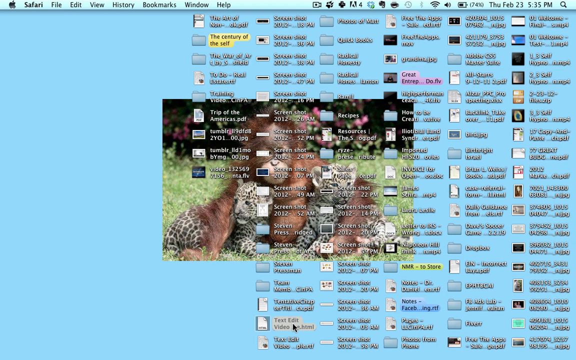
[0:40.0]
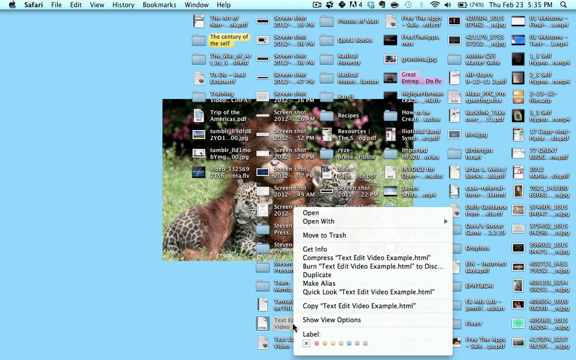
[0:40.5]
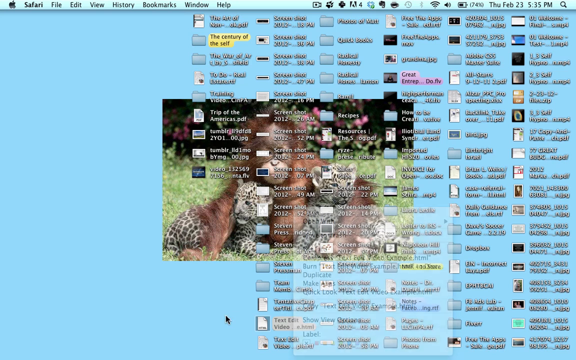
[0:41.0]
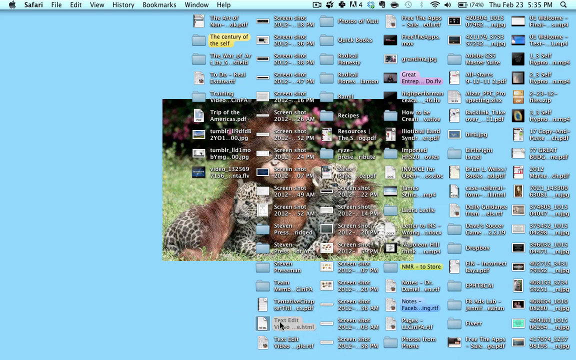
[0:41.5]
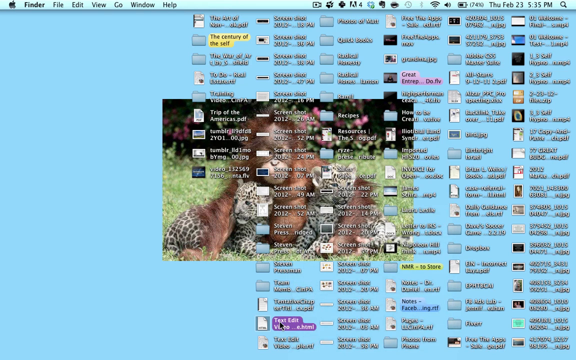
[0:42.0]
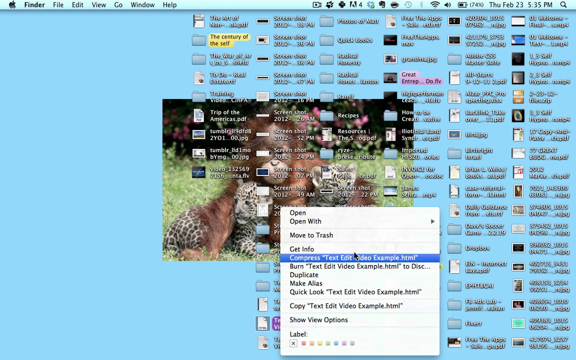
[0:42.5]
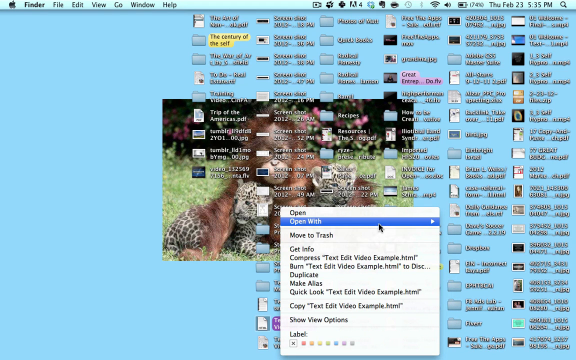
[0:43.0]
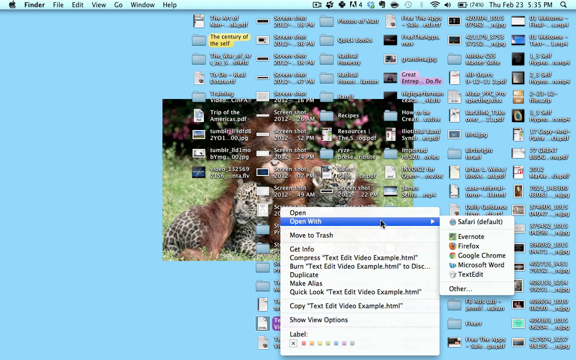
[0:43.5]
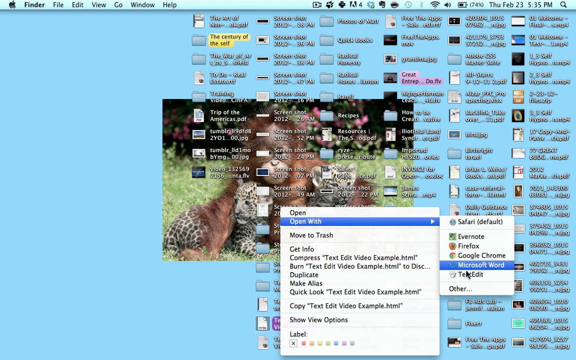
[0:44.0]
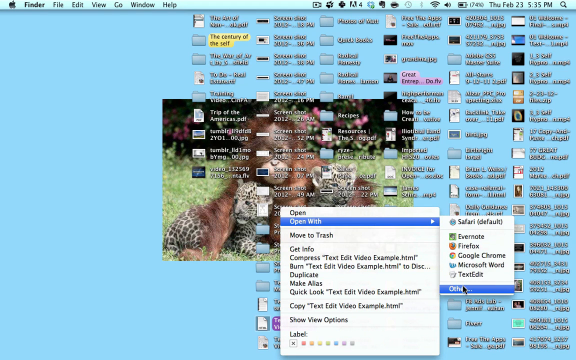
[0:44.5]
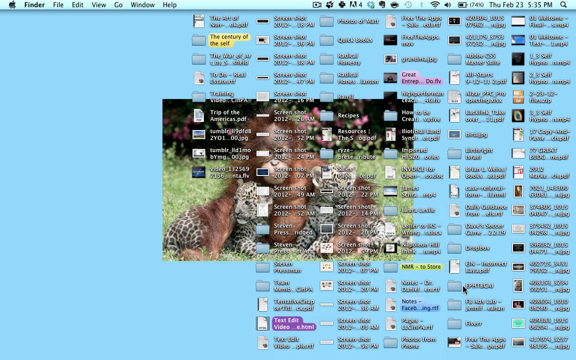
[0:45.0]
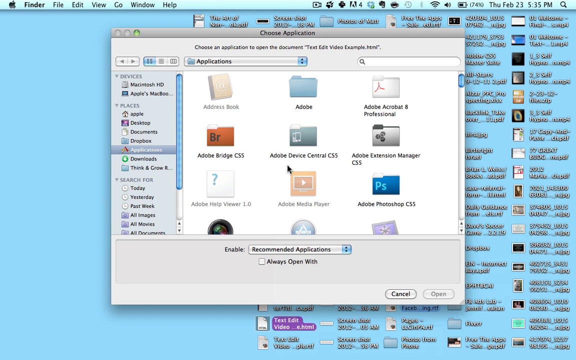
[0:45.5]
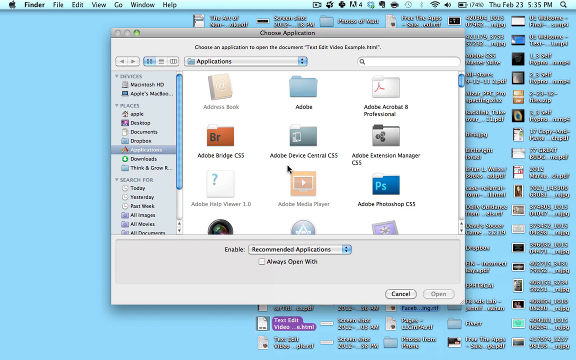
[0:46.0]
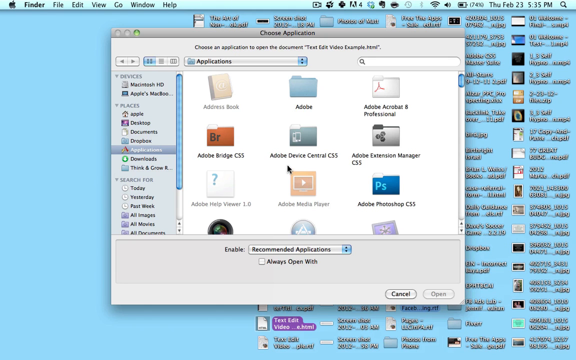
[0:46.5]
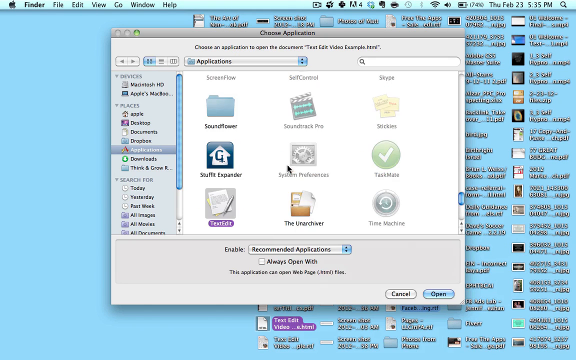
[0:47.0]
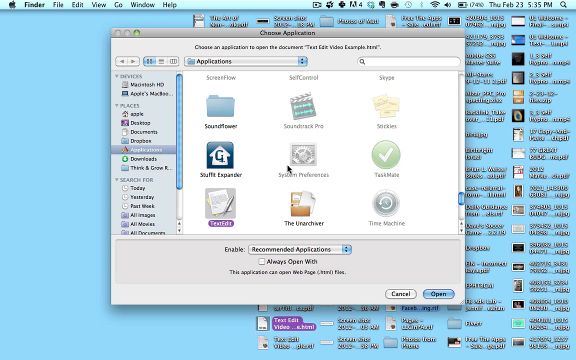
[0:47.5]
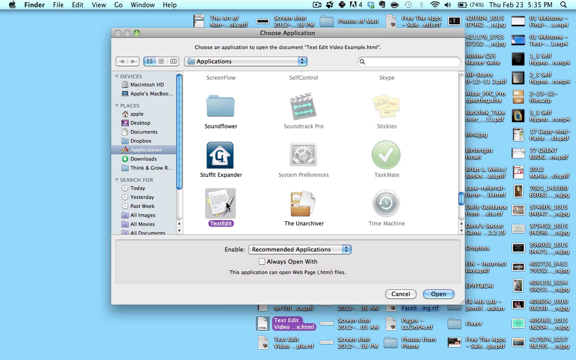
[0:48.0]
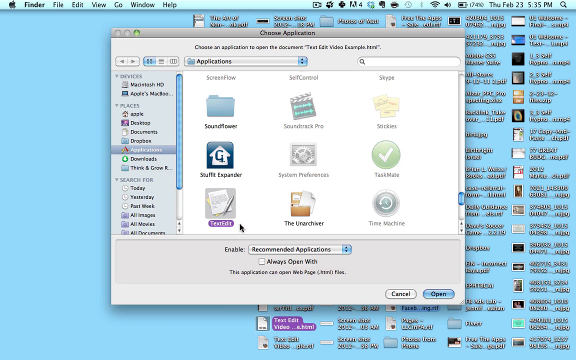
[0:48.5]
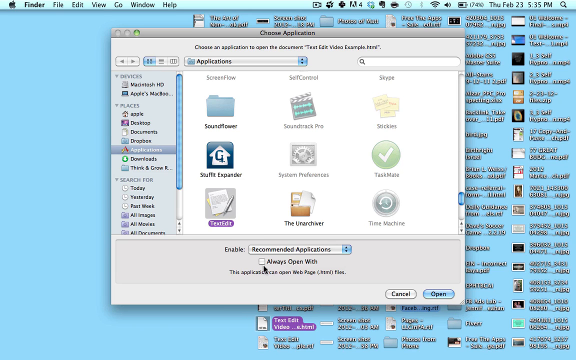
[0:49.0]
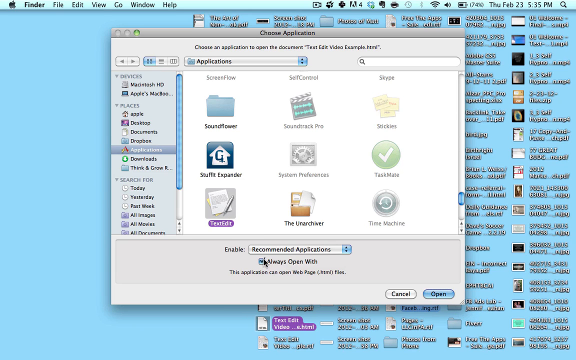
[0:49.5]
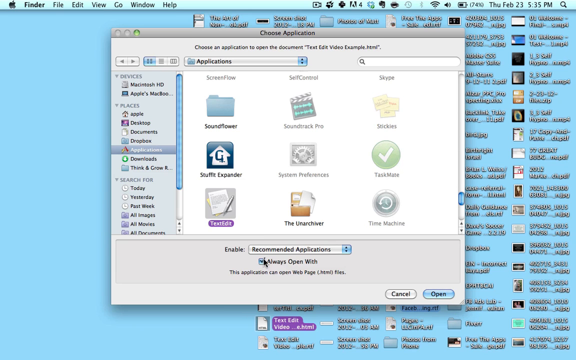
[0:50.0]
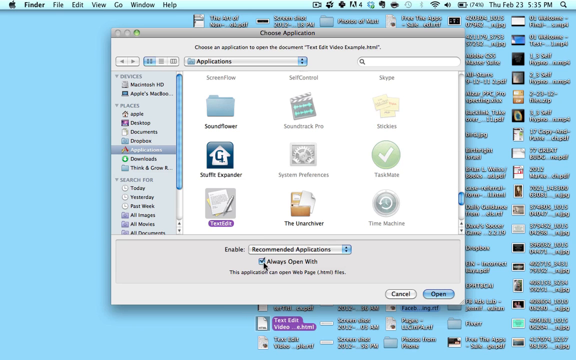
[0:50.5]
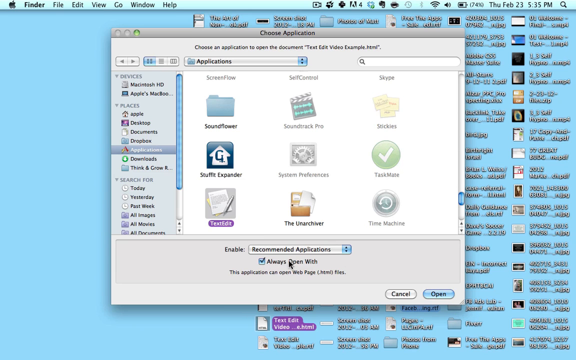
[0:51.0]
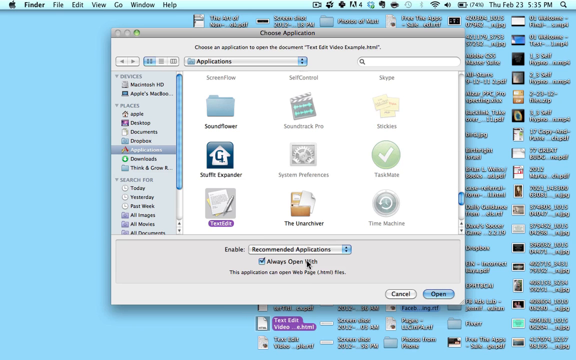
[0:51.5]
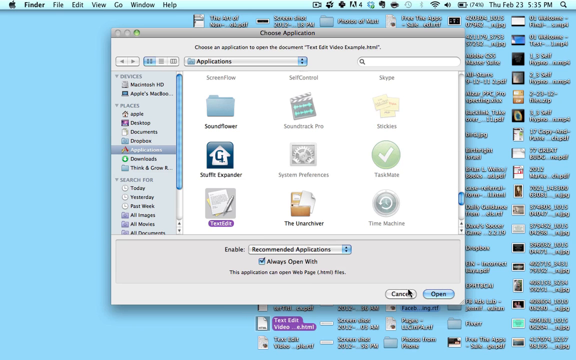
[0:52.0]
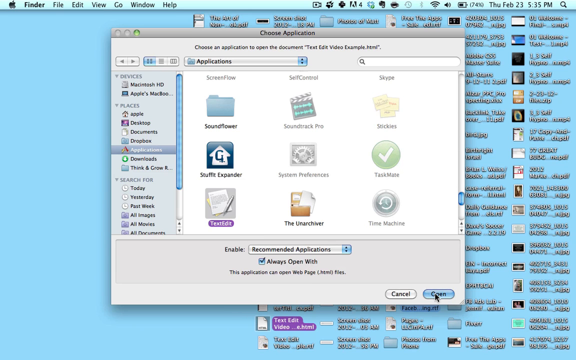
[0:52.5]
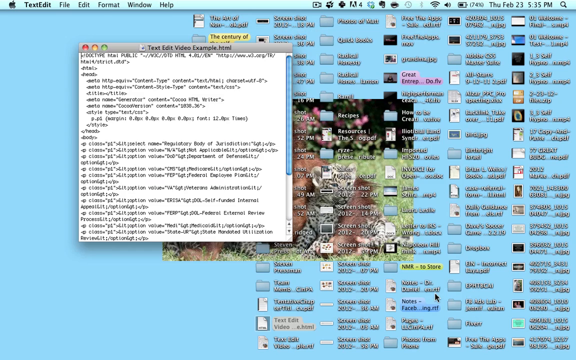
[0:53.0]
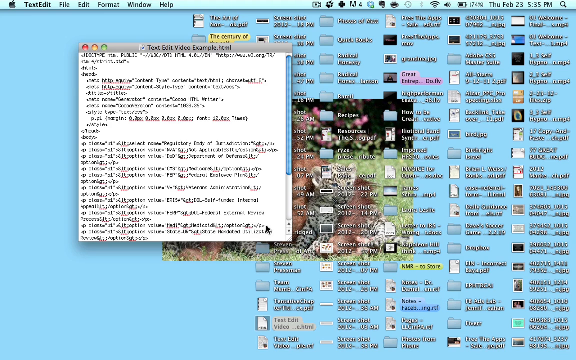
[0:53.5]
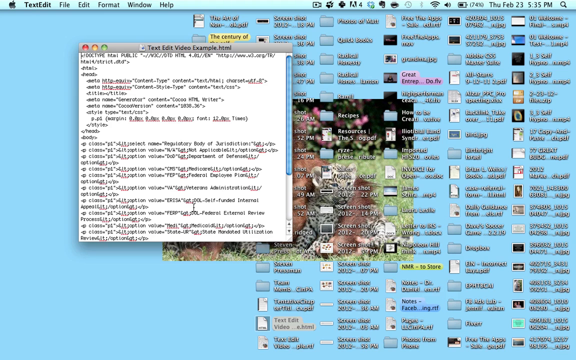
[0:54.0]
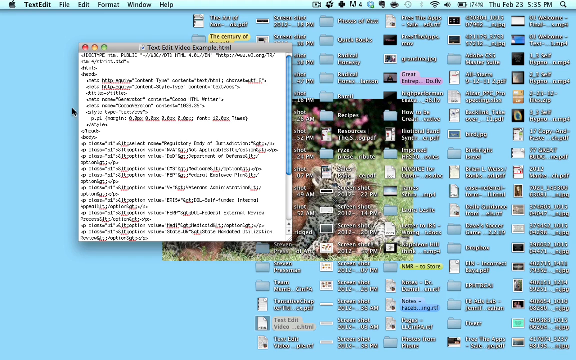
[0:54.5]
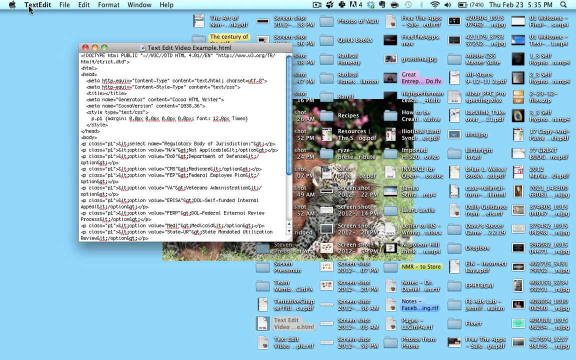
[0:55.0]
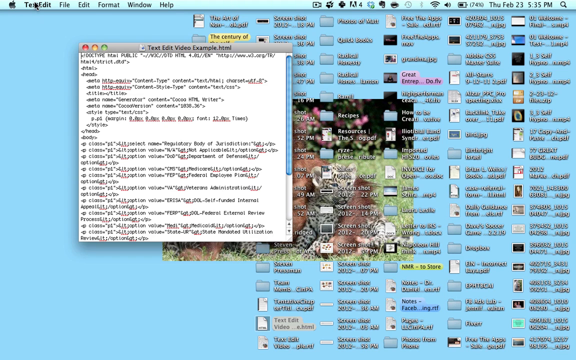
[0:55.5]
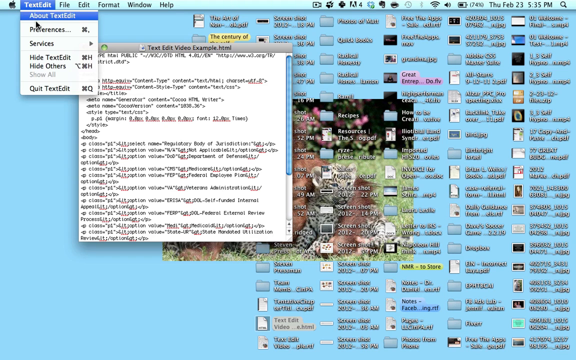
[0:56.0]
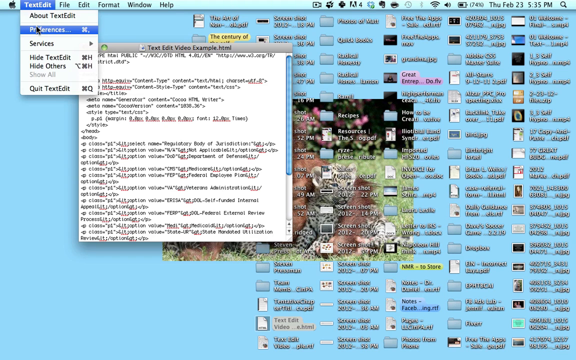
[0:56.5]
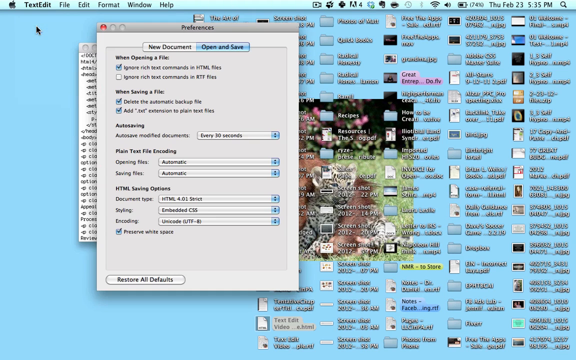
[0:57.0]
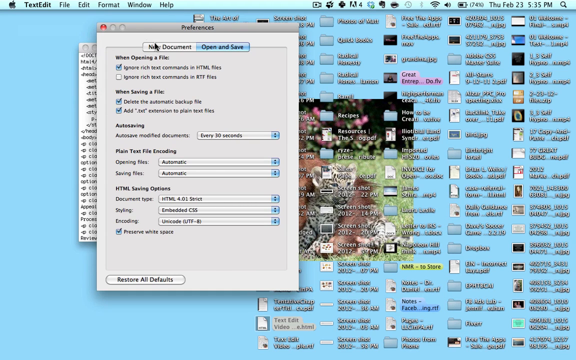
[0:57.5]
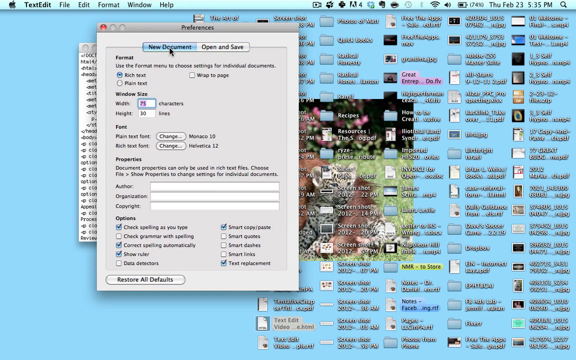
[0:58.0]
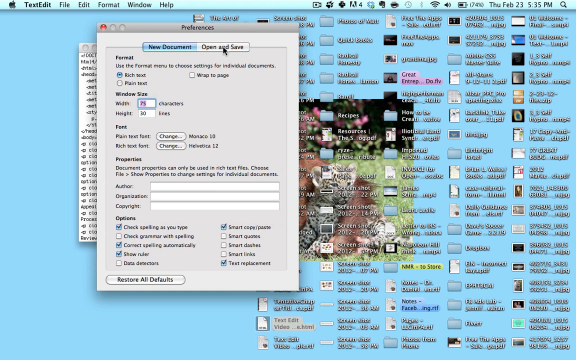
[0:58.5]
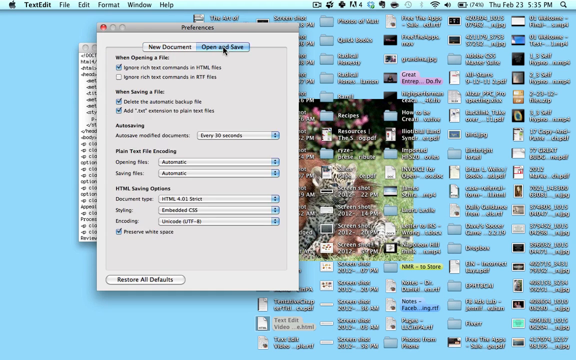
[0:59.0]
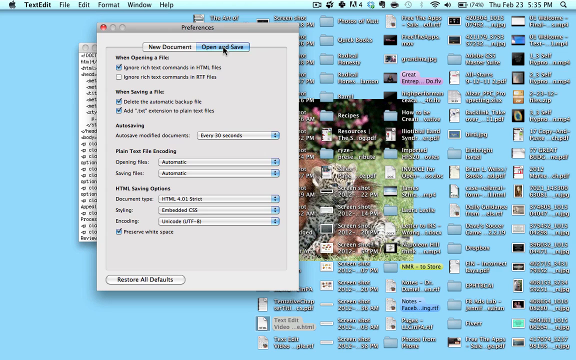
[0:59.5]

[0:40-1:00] The cursor opens the same right-click menu on the same document on the desktop, moves to the "open with" section, and in the submenu moves down to the "other" option. This brings up another window in the middle of the screen with "choose application" as the header; under it, text beginning "choose an application to open the" refers to the text edit video example .html document. The window is formatted like a standard window of that era. Its list of options includes "address book", "Adobe", "Adobe Acrobat 8 Professional", "Adobe Bridge CSS", "Adobe Device Central CSS", "Adobe Extension Manager CSS", "Adobe Help Viewer 1.0", "Adobe Media Player" and "Adobe Photoshop CSS". The list is moved down to the very bottom, to a program called TextEdit. With TextEdit highlighted, the cursor goes down to check a box underneath the applications, with the text "always open with" to the right of the check box. They then move to the lower right of the window and click the Open button, which is right next to the Cancel button, and the window closes. Next they move to the top left of the desktop, where "text edit" appears right next to the Apple logo, to its right. Clicking it opens a submenu with the options "about text edit", "preferences", "services", "hide text edit", "hide others", "show all" and "quit text edit". They go down to "preferences", which opens the preferences window in the middle of the screen and to the left. In the Preferences window they click the option at the top under the header "New Document", which opens a menu full of different parameters for the document. They then click the tab immediately to the right of the New Document tab, which has the words "Open and Save".